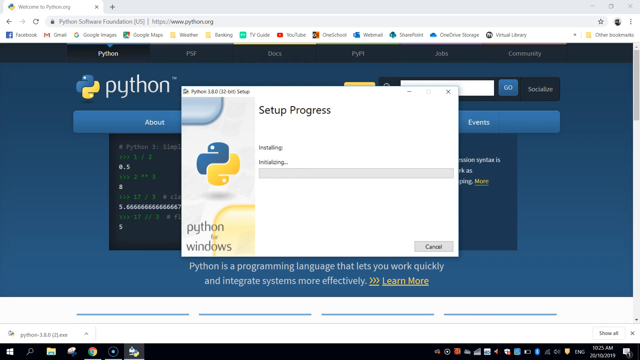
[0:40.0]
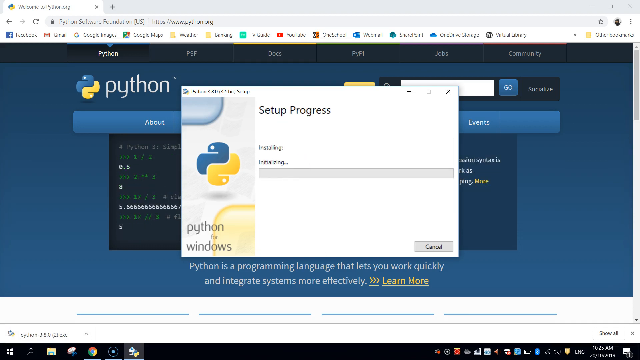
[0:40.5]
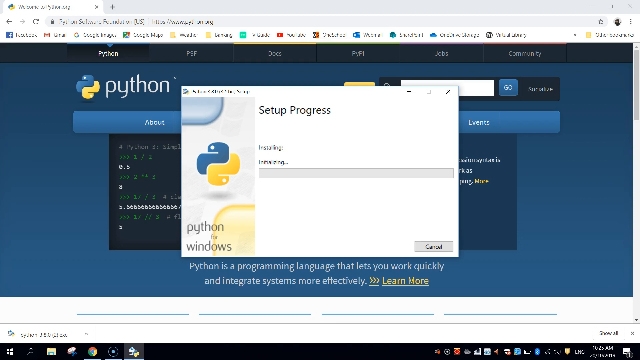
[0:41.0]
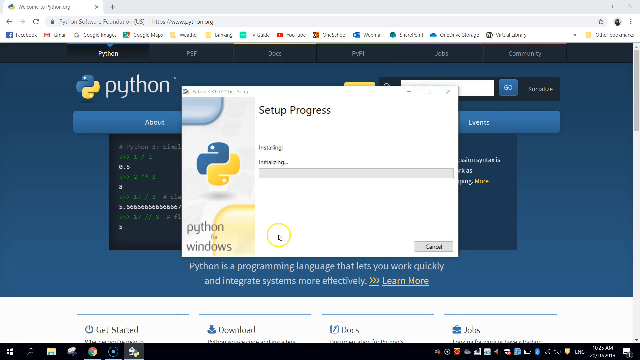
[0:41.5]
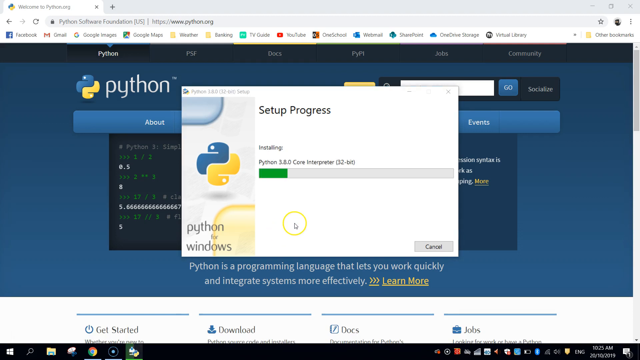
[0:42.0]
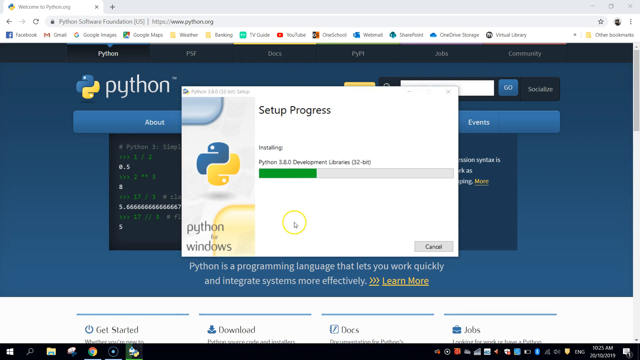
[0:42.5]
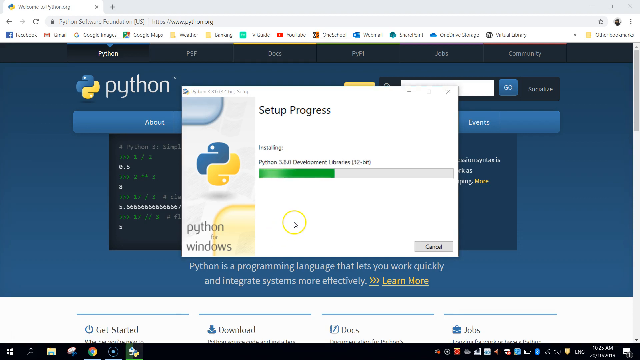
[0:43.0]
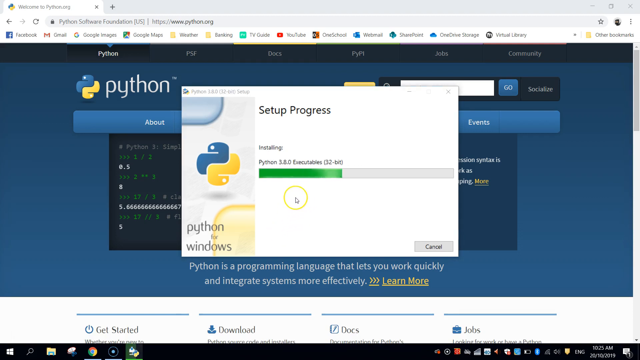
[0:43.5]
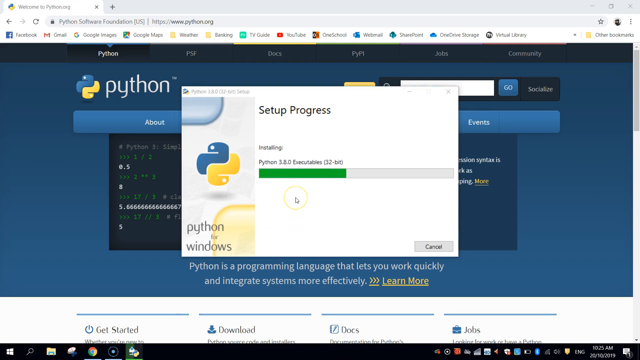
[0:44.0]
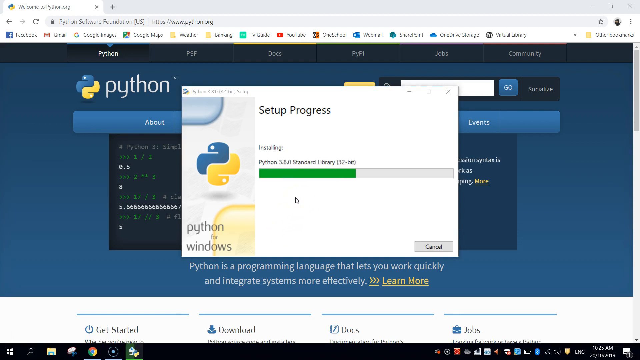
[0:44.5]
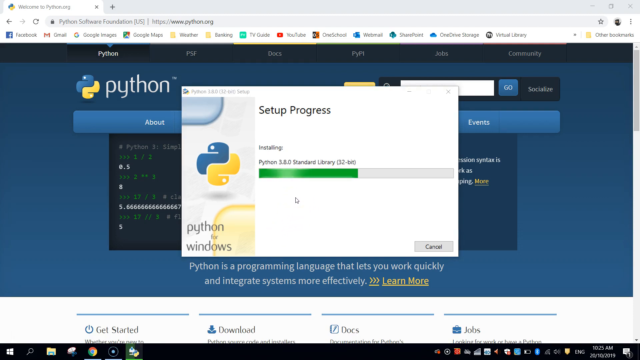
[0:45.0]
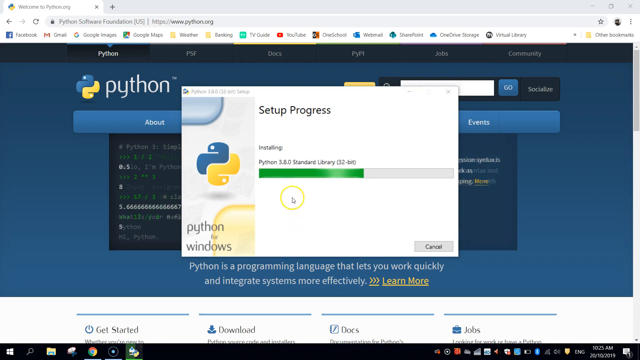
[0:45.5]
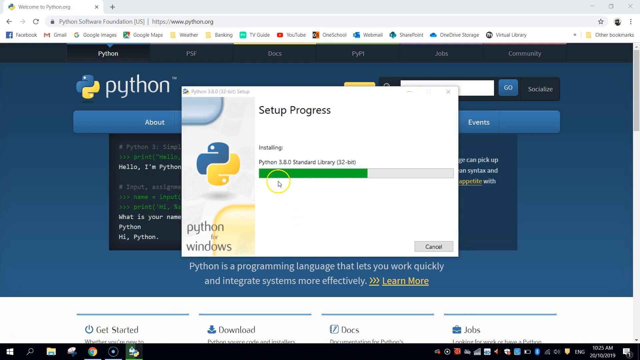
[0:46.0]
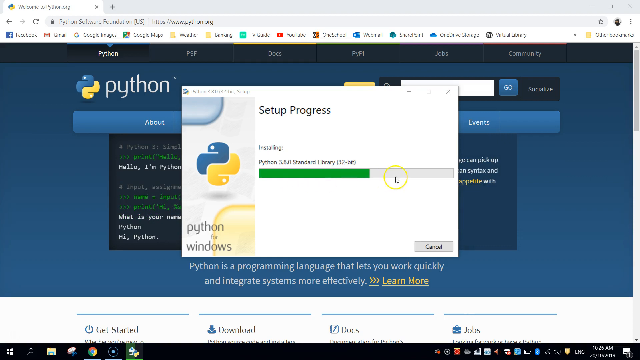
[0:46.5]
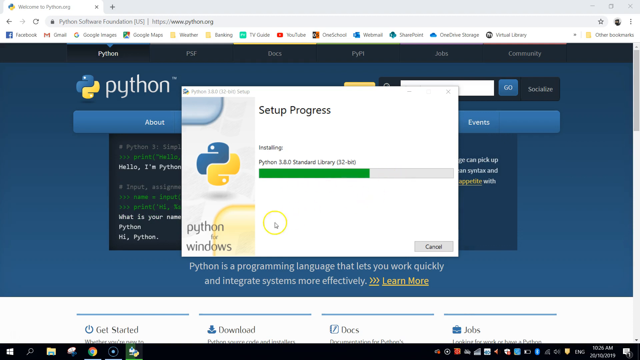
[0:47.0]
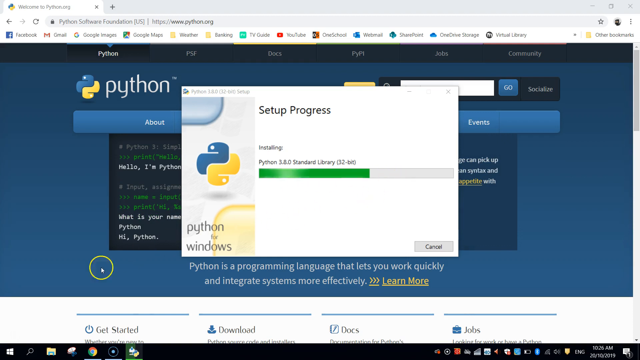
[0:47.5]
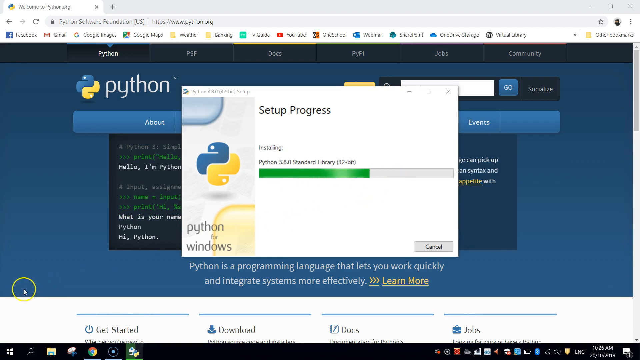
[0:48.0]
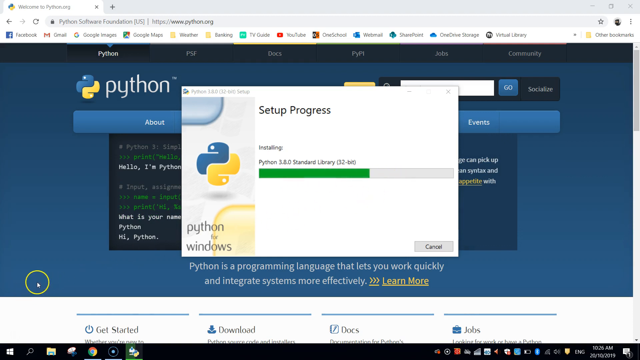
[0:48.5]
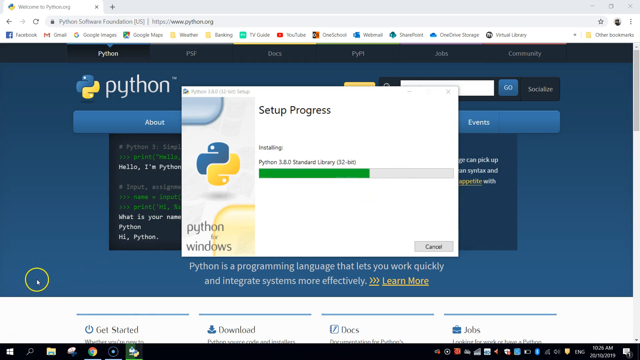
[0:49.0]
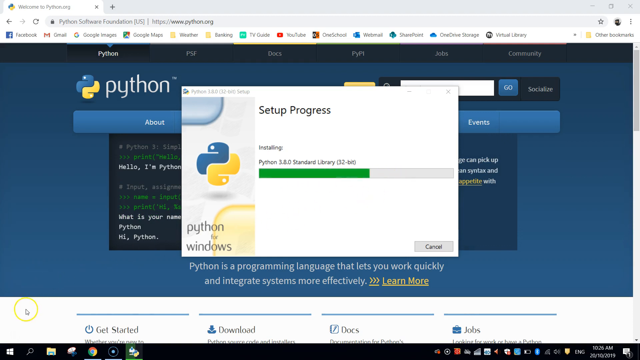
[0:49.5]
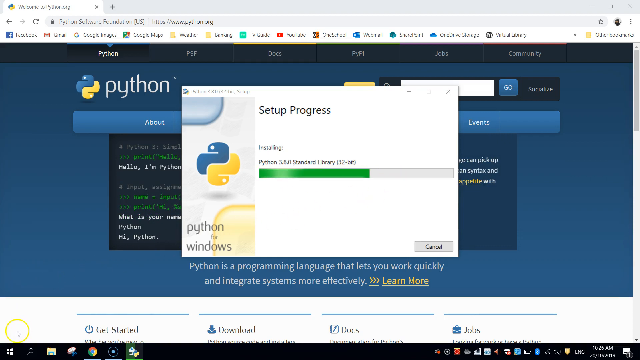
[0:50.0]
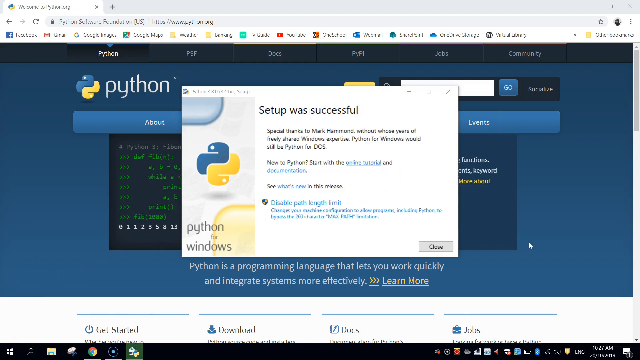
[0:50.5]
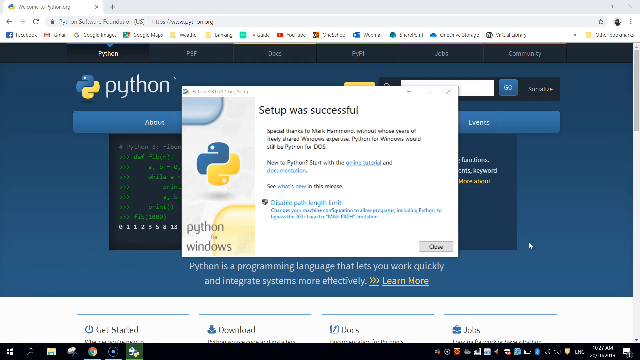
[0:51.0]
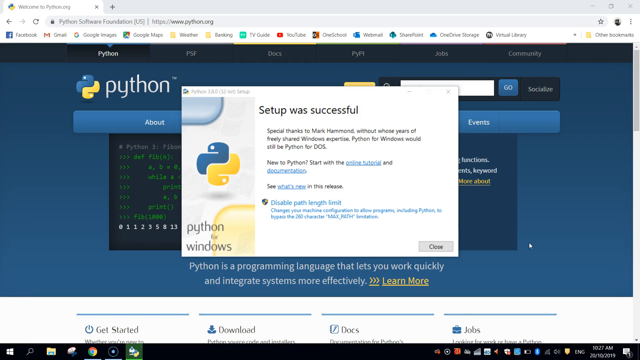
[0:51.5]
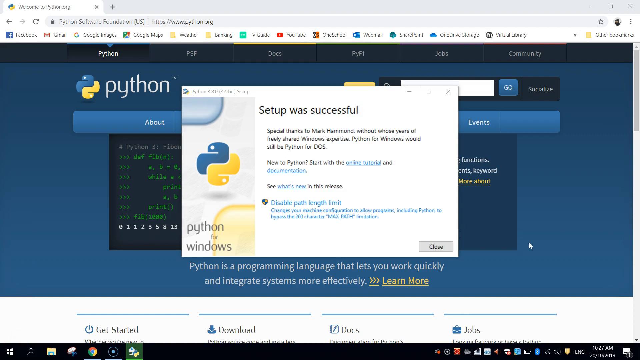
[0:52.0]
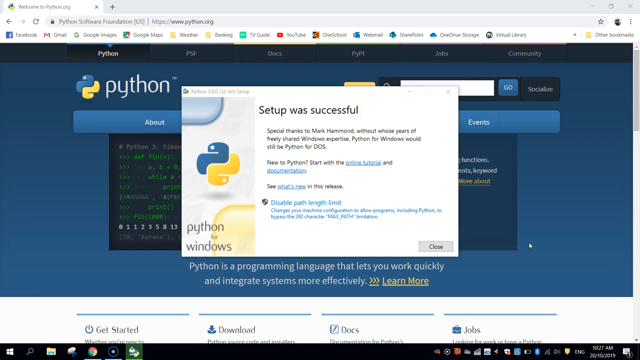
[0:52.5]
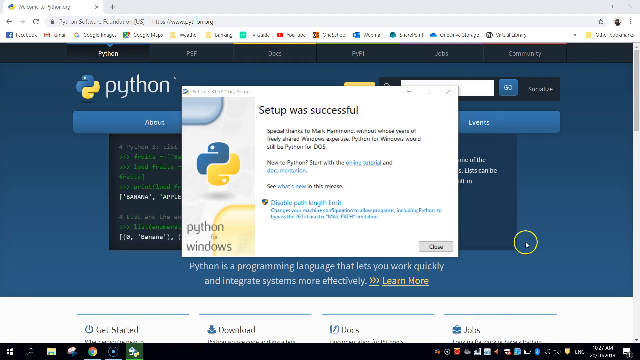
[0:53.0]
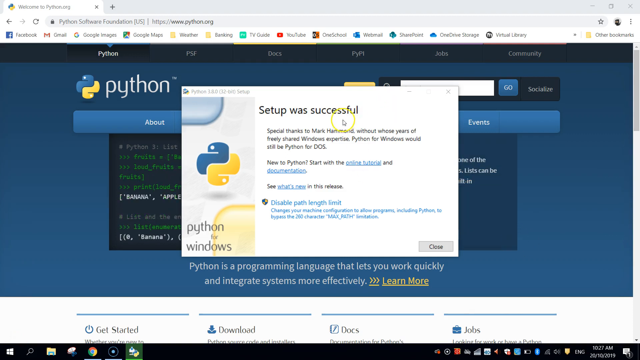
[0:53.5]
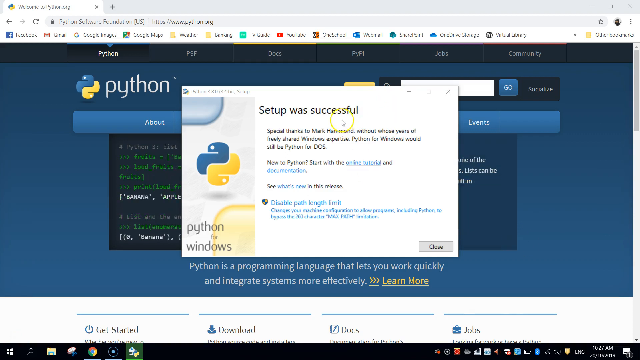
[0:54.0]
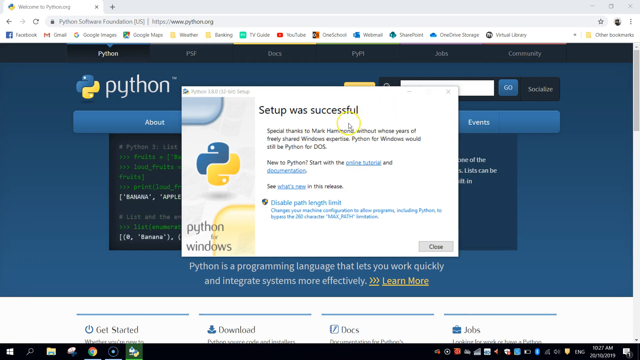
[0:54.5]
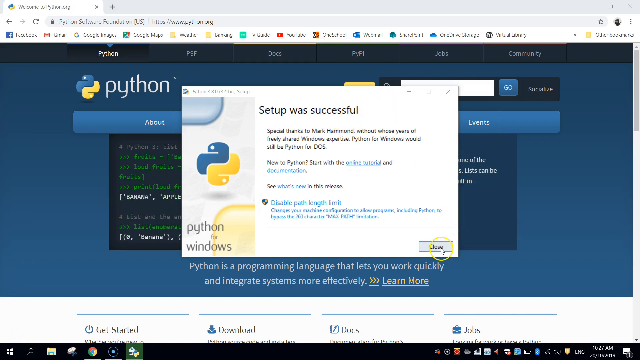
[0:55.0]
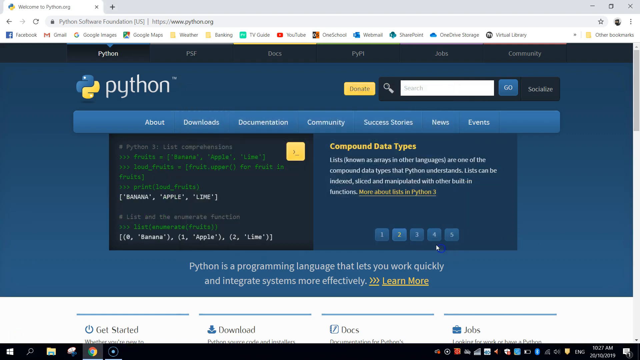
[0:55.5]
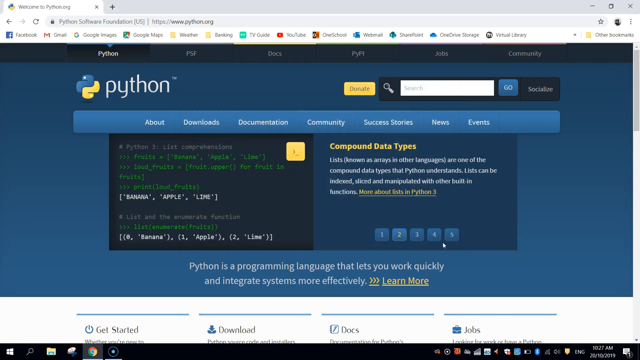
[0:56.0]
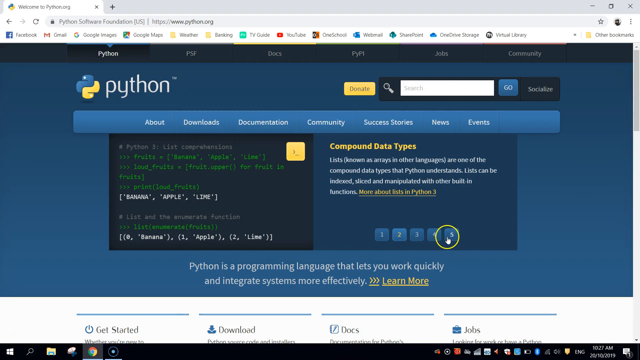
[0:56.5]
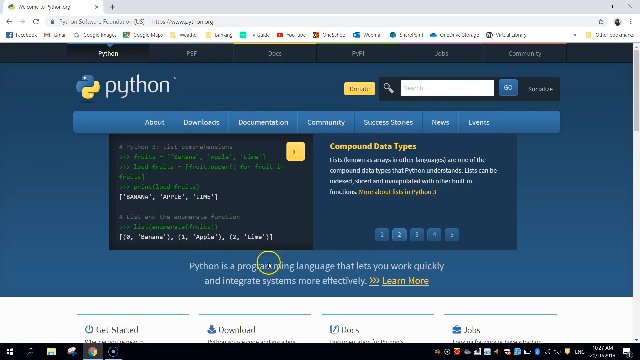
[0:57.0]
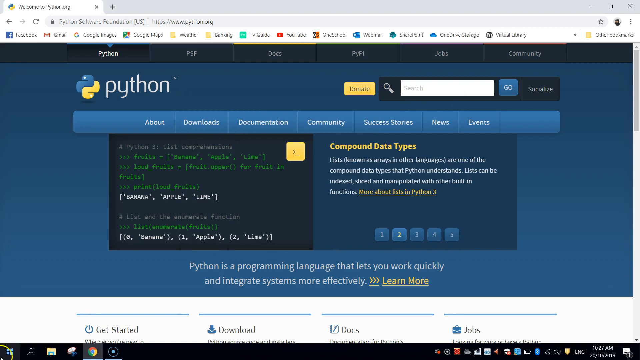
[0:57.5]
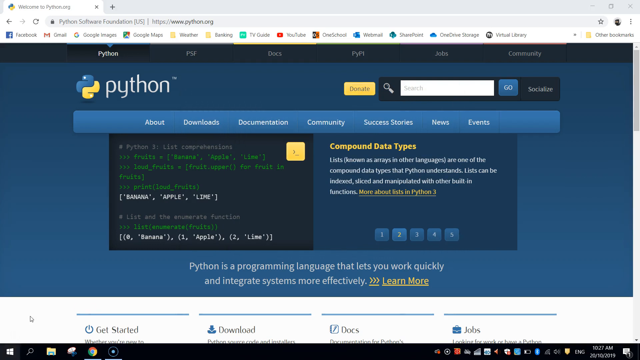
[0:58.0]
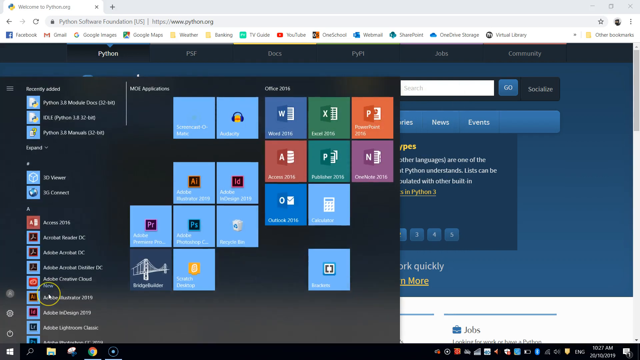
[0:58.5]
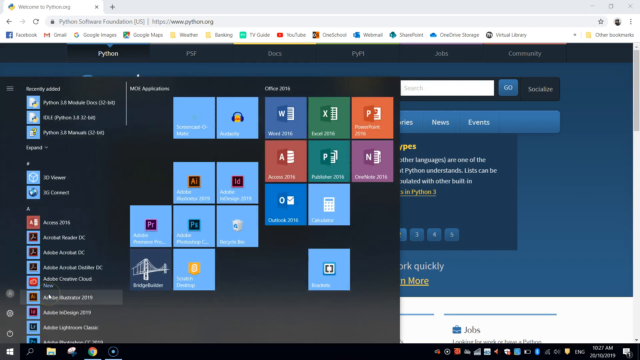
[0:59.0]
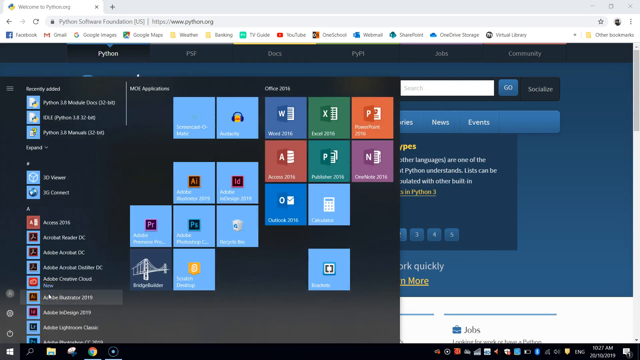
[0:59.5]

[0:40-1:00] The green bar finishes the installation, installing the standard library and files needed for Python. A message shows that the setup was successful, along with some information on Python, tutorials to start, and new releases. The user closes this window and goes to the Windows search bar logo at the bottom left on the task manager, where various computer apps appear in alphabetical order. Under recently added, Python and Python idle are the top two, and Python manuals is third. Below are alphabetical apps such as 3D Viewer and 3G Connect, a bunch of Adobe apps under the A section, and other Microsoft Office apps.